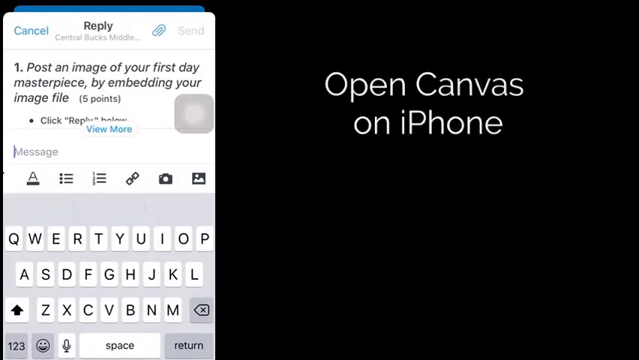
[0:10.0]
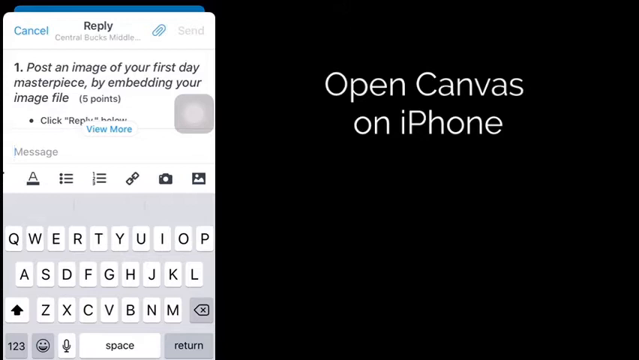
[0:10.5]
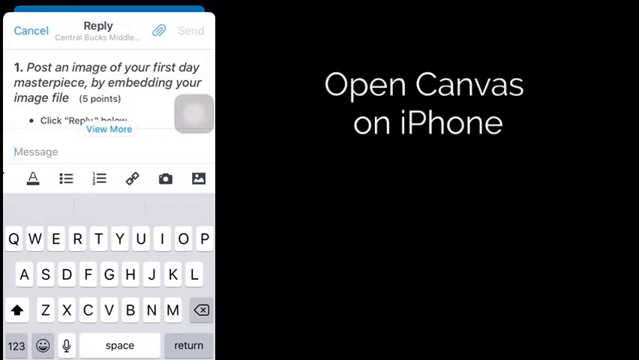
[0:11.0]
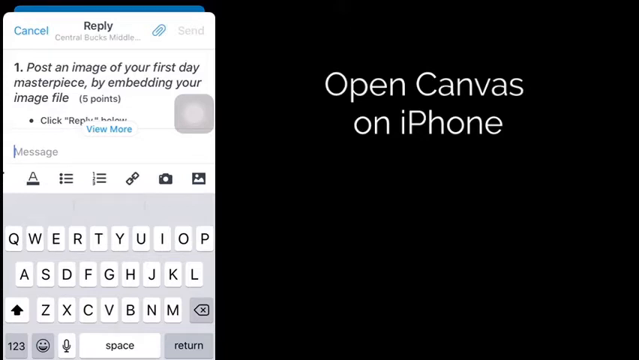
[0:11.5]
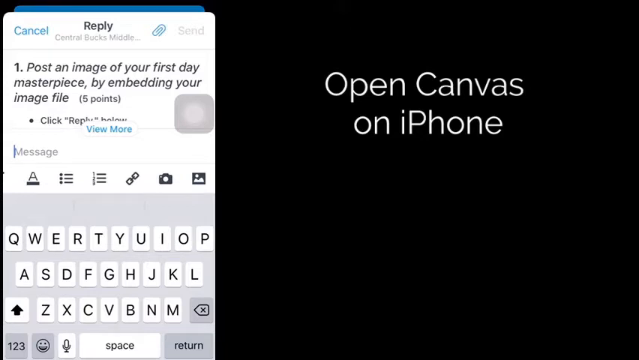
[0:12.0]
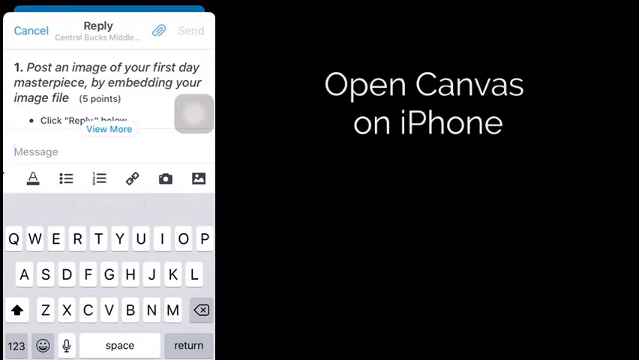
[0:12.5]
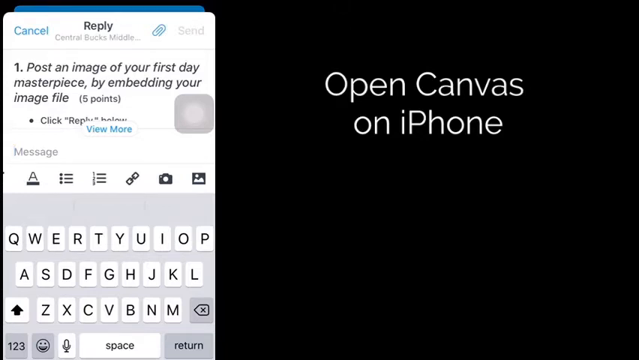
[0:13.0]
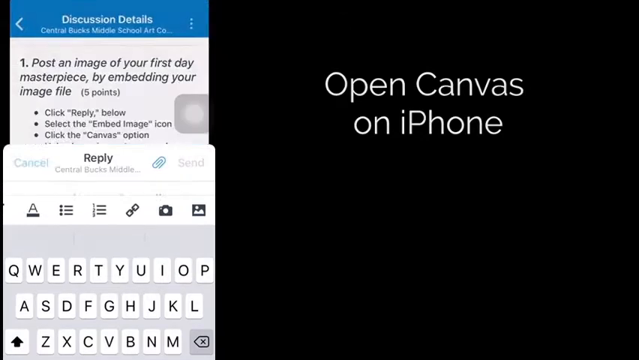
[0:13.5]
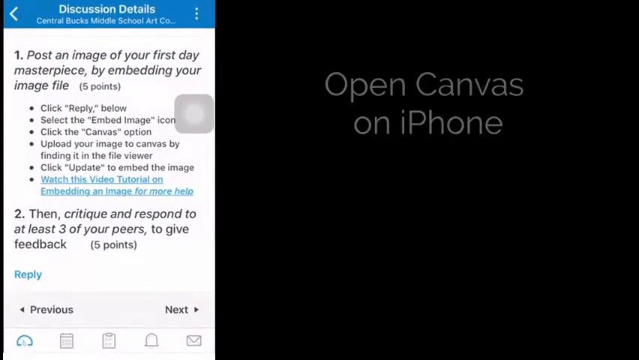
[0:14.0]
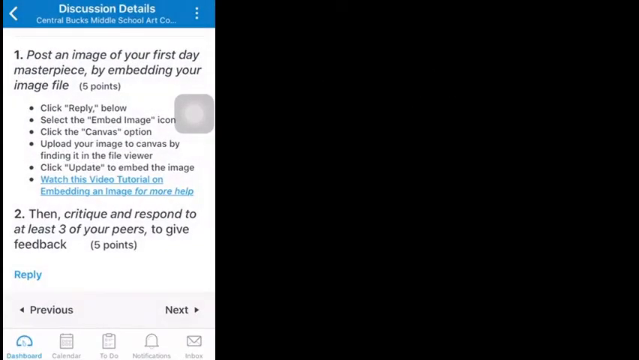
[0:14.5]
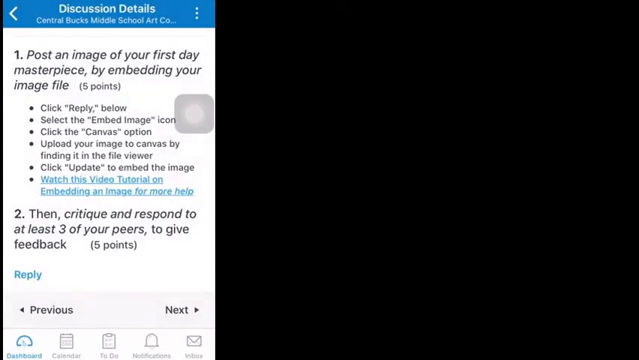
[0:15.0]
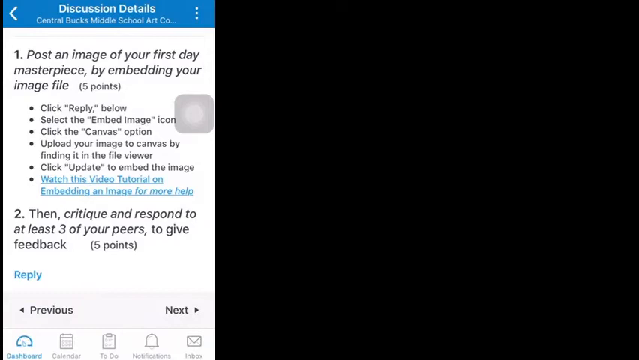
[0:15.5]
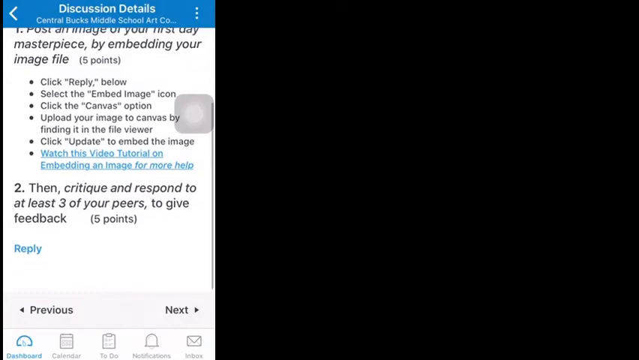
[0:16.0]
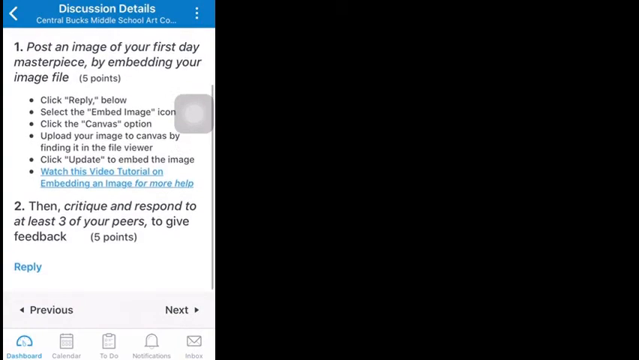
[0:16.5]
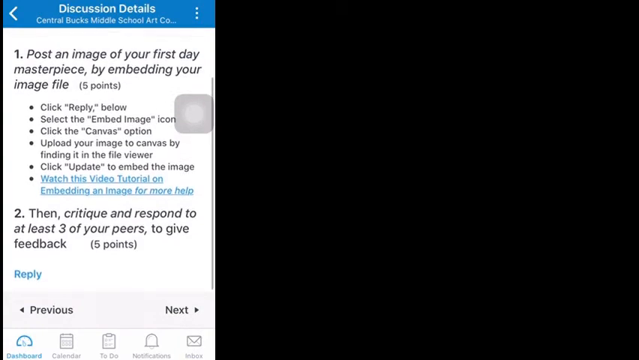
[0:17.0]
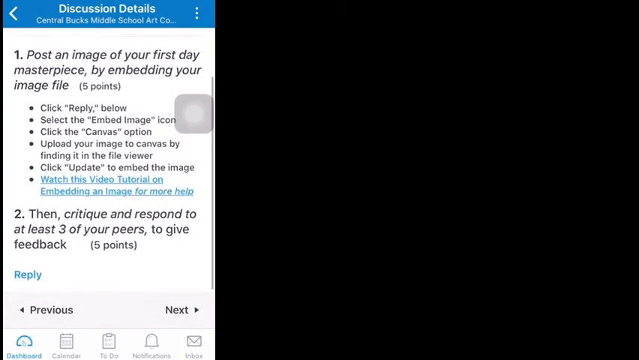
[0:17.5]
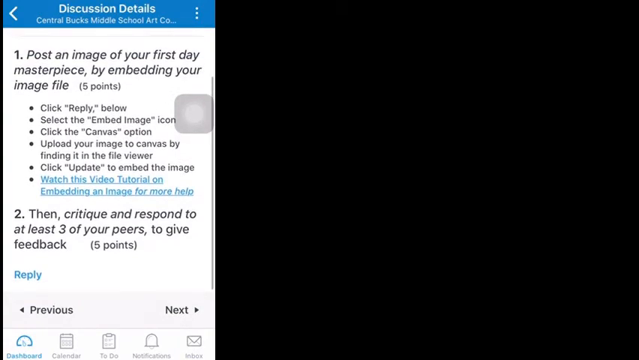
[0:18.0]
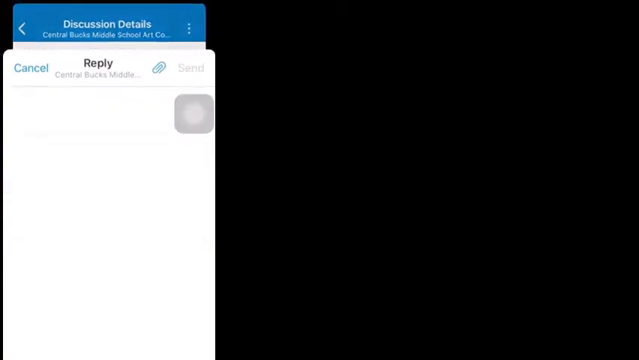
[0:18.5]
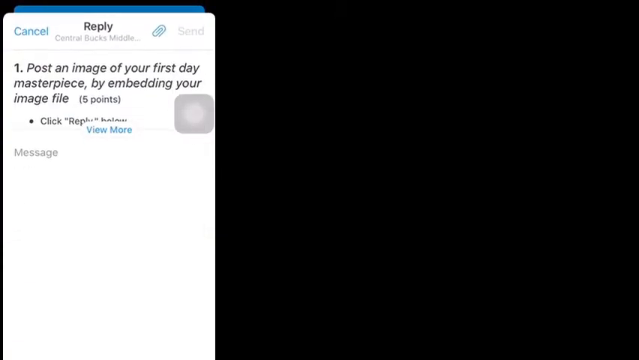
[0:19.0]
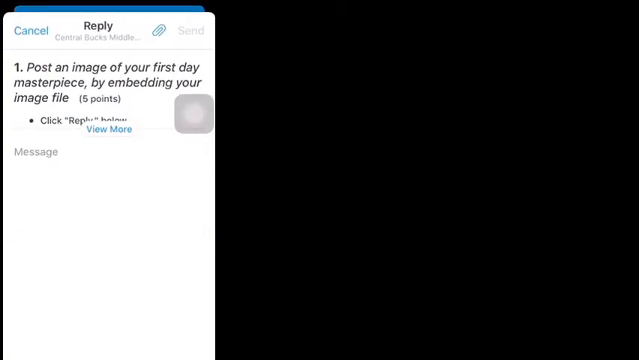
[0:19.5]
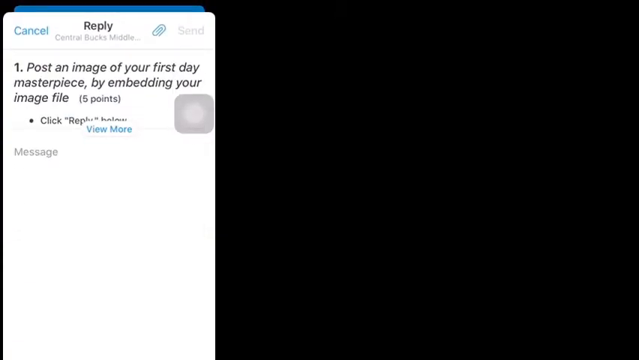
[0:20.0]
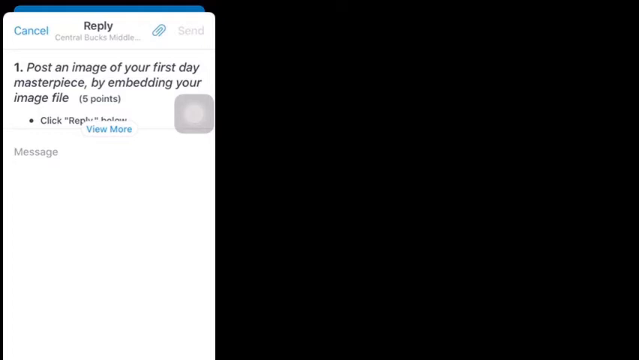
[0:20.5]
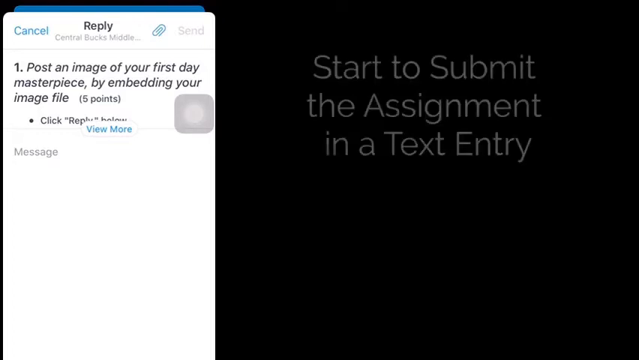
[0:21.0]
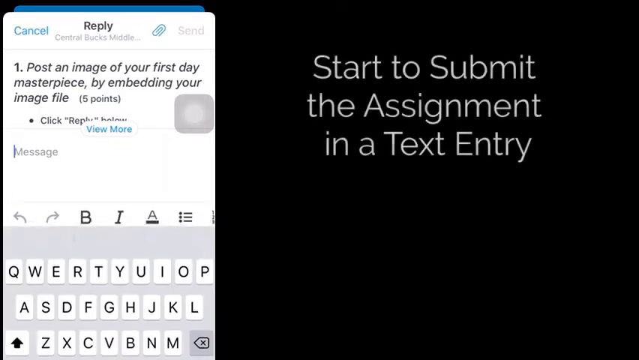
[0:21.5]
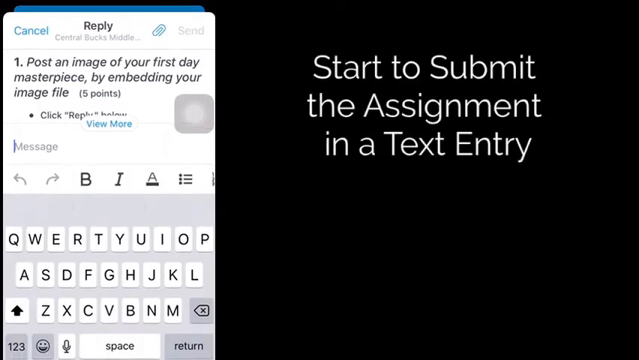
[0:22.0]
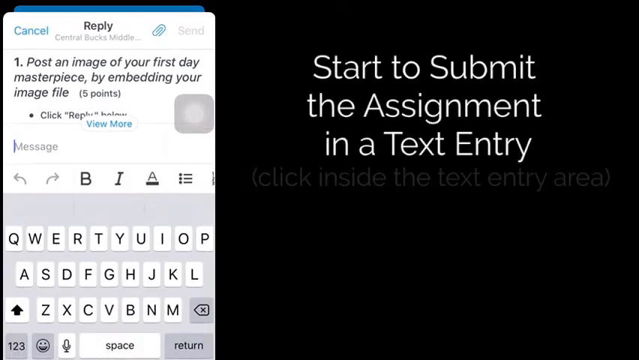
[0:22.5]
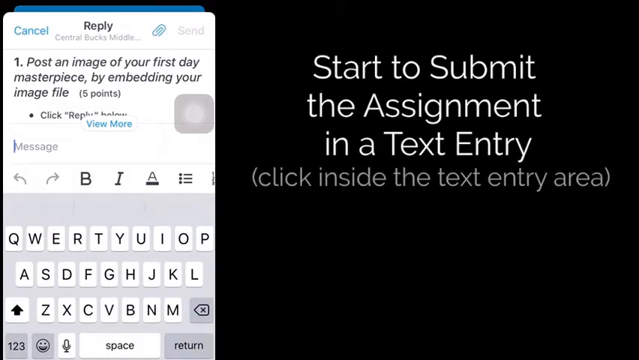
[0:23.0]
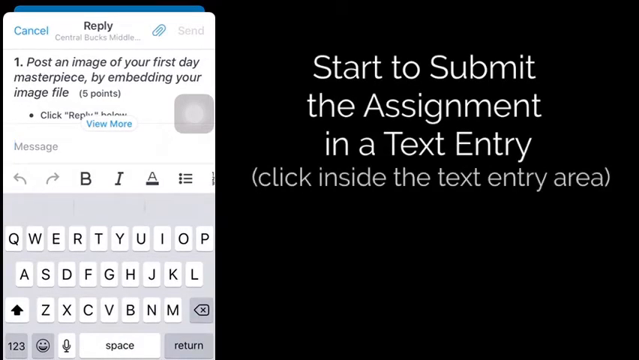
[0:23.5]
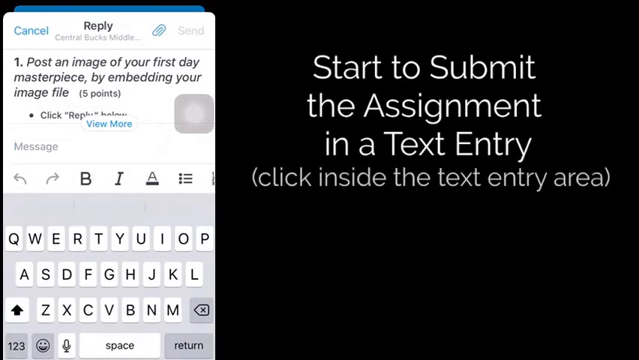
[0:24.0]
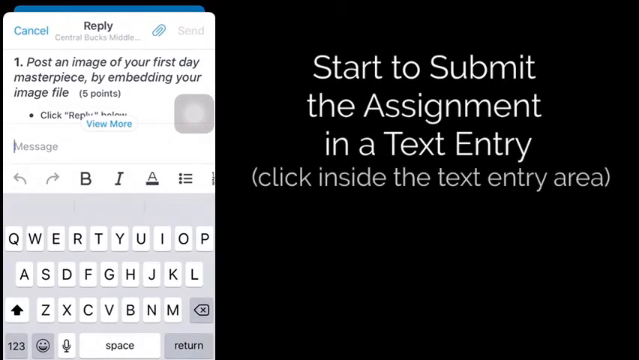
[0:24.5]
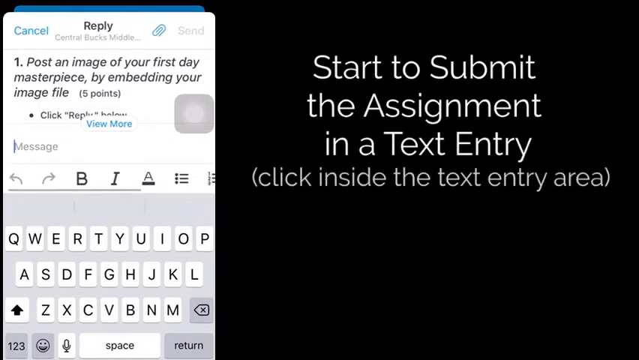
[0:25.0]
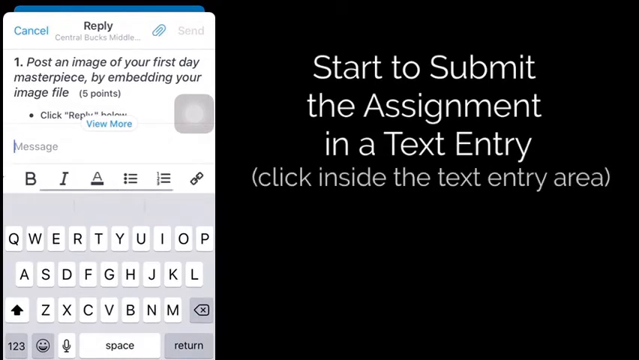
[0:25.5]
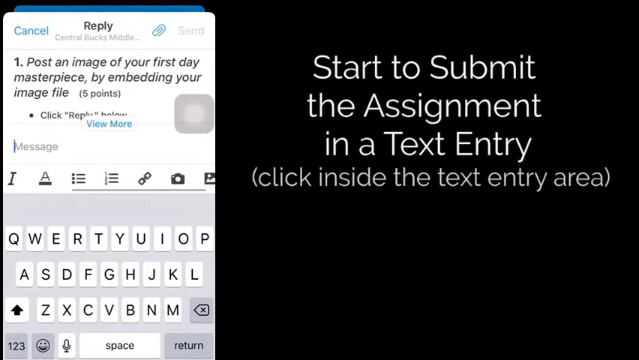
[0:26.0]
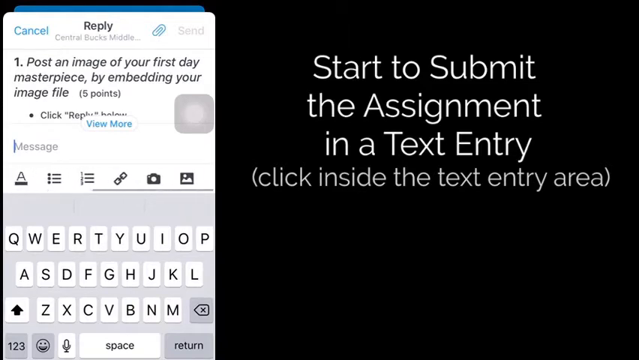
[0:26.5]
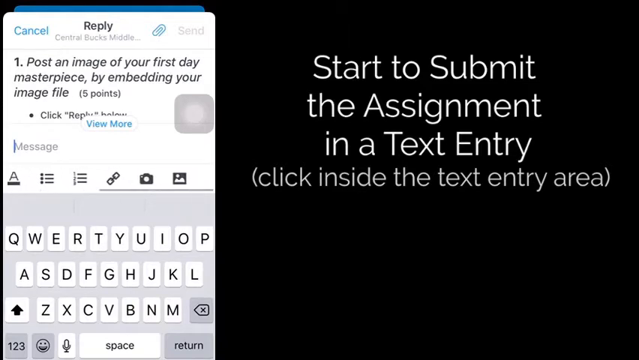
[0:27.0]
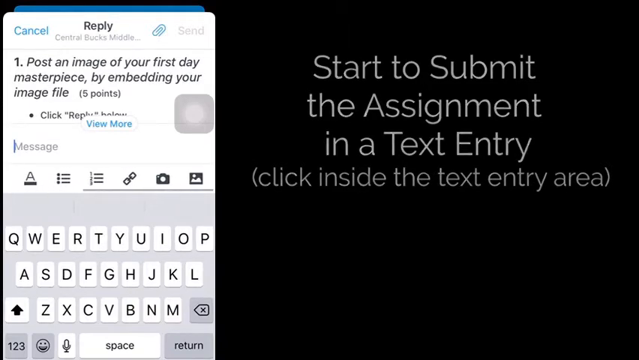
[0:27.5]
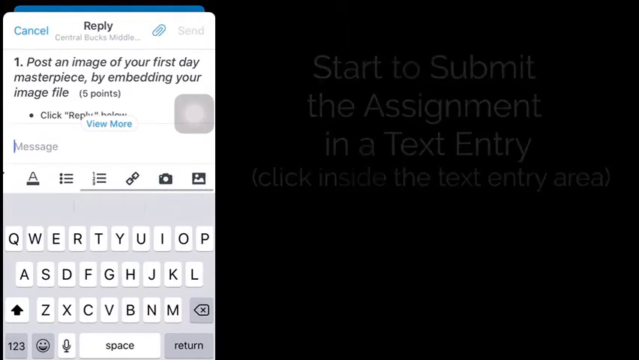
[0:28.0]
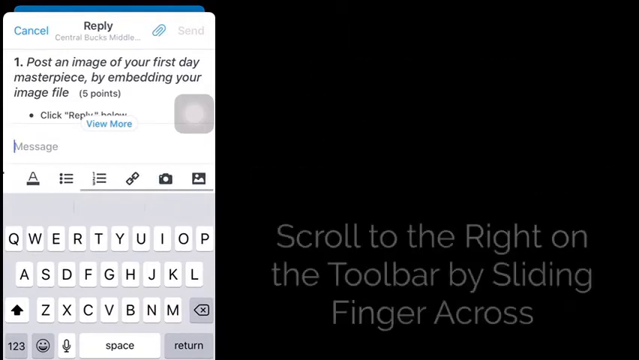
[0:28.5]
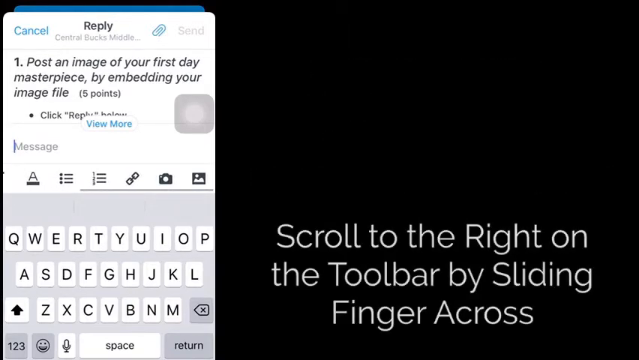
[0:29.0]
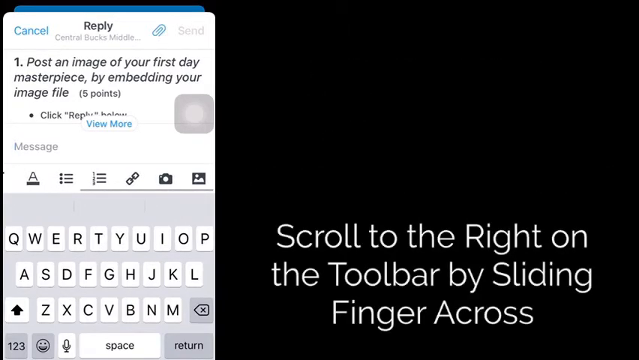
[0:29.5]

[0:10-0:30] The phone screen is on the left, covering about a third of the screen, and the other two thirds are a black background. Centered in the top half of the black area is the text "Open Canvas on iPhone". On the phone screen, a line of text runs across the top: "Cancel" in blue font on the left and "Reply" in the center. Below that, in light gray font, is "Central Bucks Middle...", slightly to the right of that is a blue paperclip symbol, and slightly to the right of that is a grayed-out "Send". Below is the text "1. post an image of your first day masterpiece by embedding your image file. (5 points)". The text then expands to give instructions, each with a bullet point: "click Reply below", "select the Embed Image icon", "click the Canvas option", "upload your image to Canvas by finding it in the File Viewer", "click Update to embed the image", and finally "watch this video tutorial on embedding an image for more help". After a line of space comes "2. critique and respond to at least three of your peers to give feedback, (5 points)".